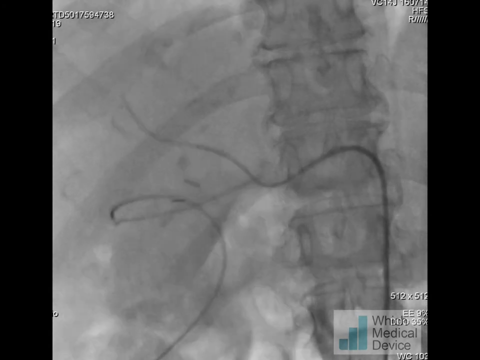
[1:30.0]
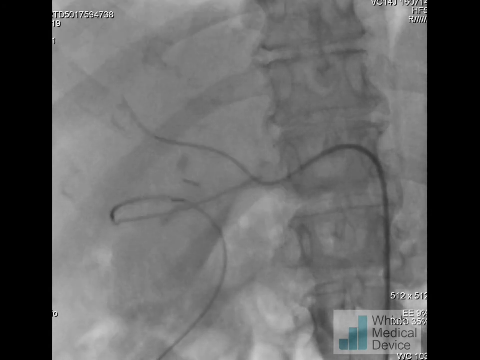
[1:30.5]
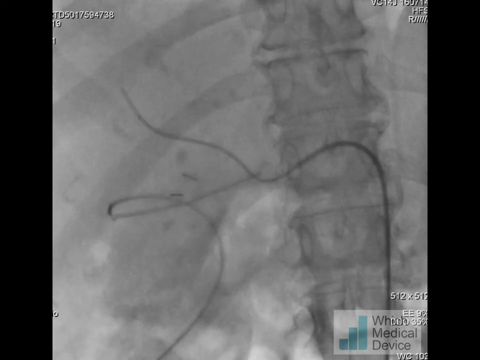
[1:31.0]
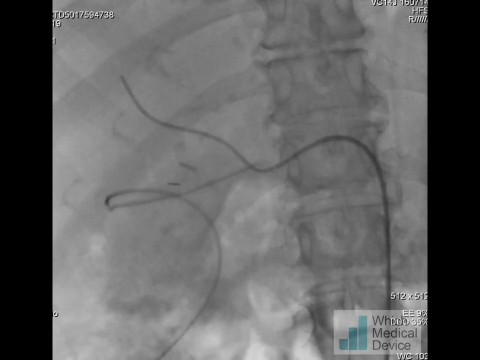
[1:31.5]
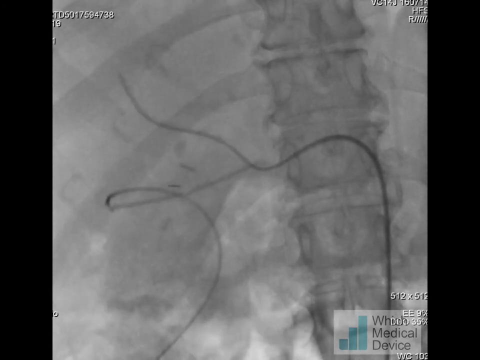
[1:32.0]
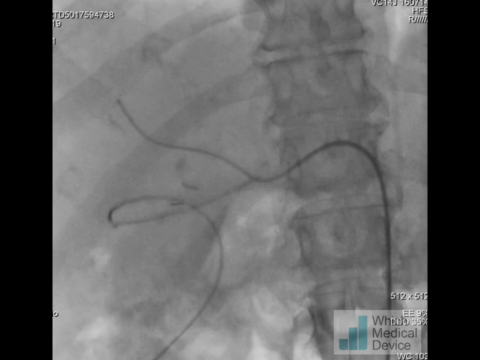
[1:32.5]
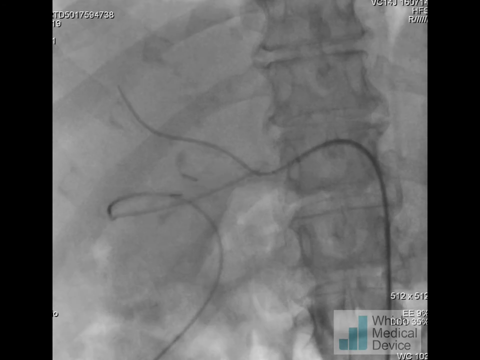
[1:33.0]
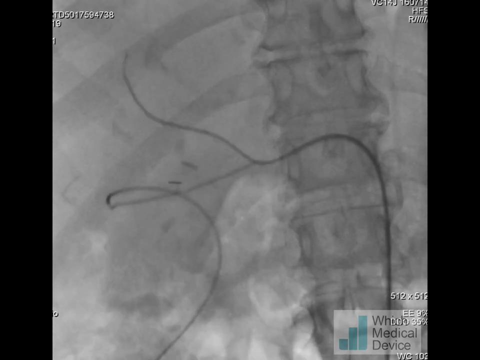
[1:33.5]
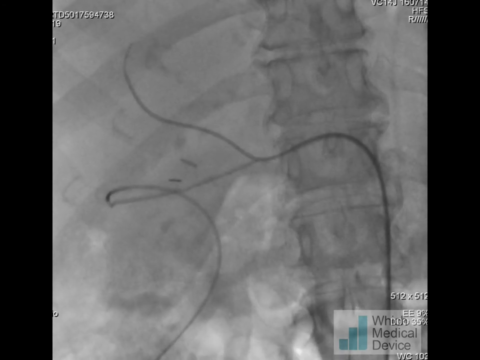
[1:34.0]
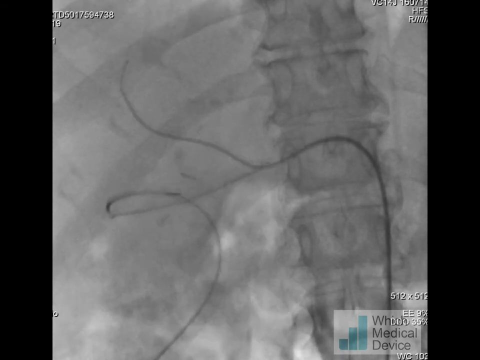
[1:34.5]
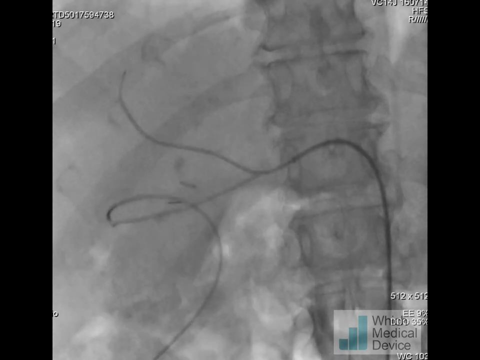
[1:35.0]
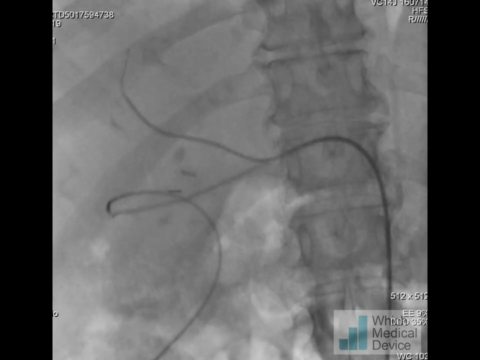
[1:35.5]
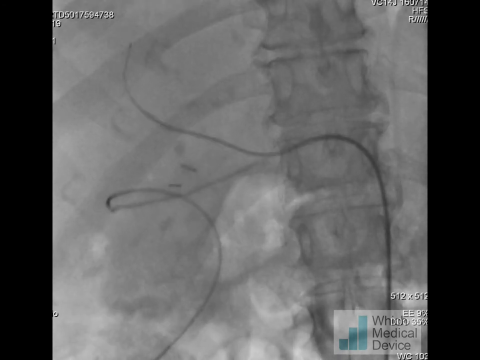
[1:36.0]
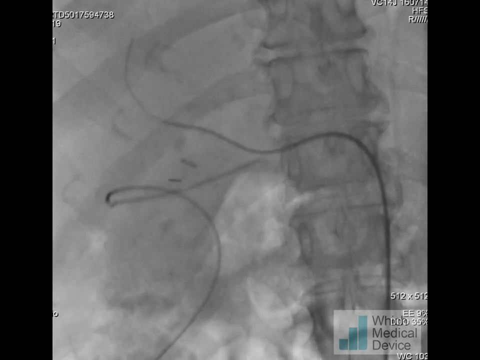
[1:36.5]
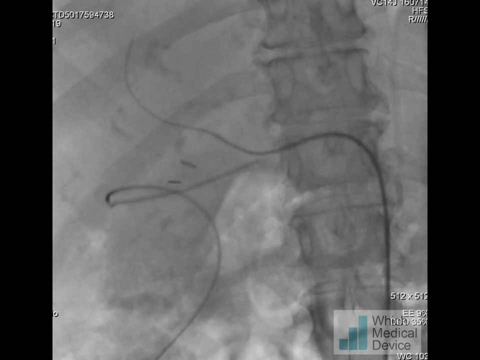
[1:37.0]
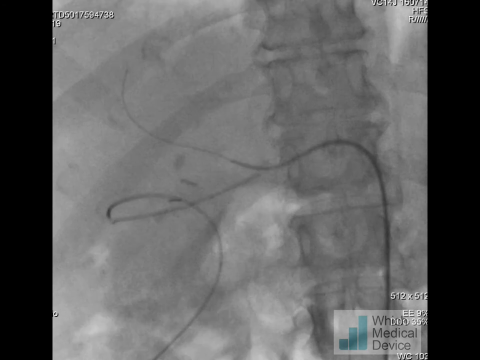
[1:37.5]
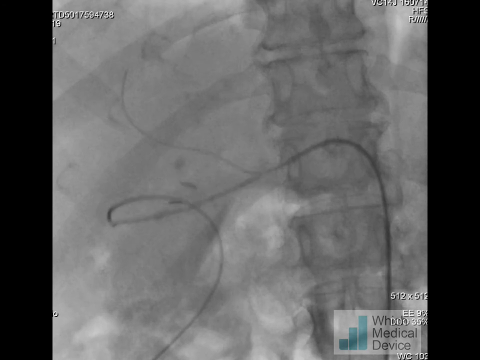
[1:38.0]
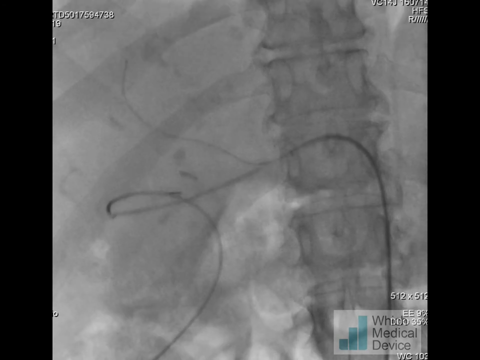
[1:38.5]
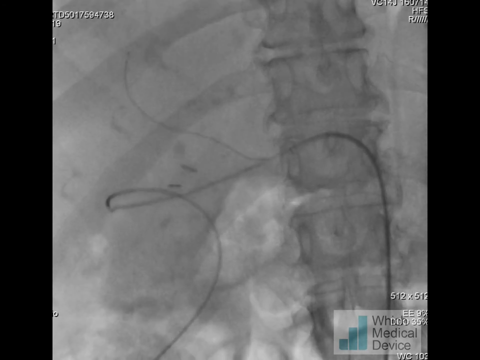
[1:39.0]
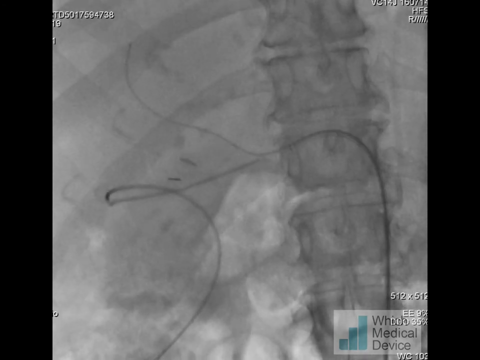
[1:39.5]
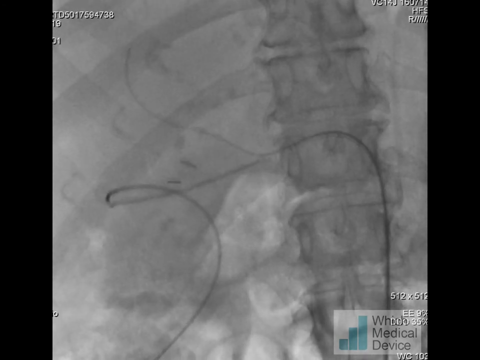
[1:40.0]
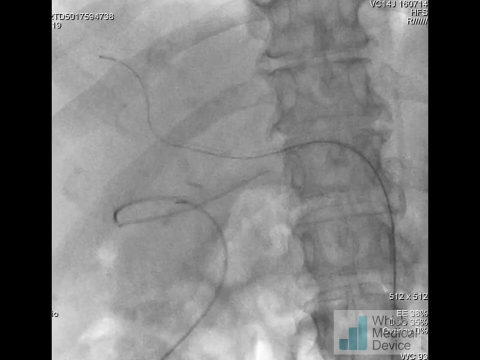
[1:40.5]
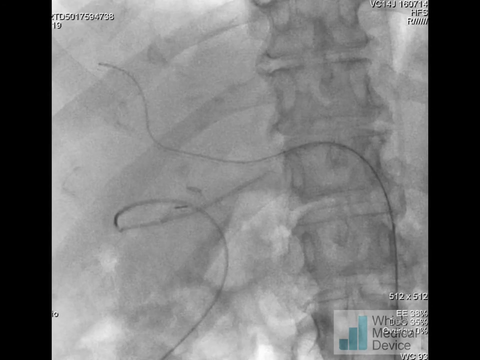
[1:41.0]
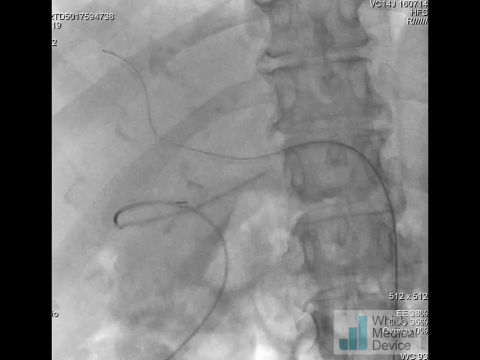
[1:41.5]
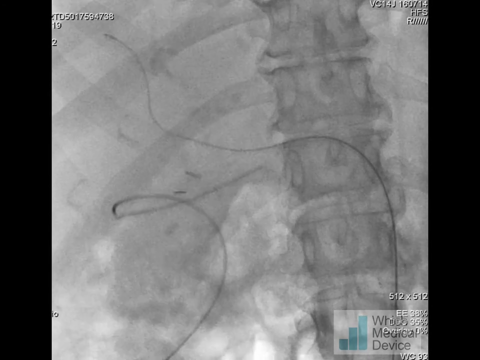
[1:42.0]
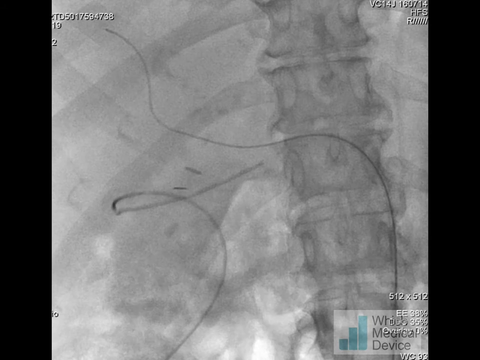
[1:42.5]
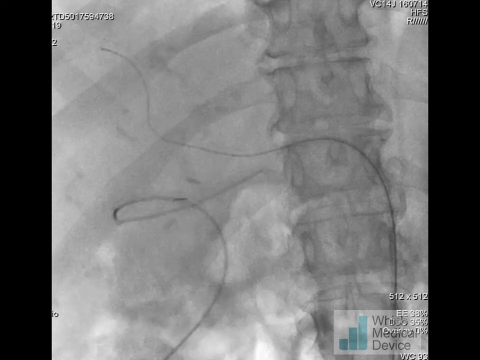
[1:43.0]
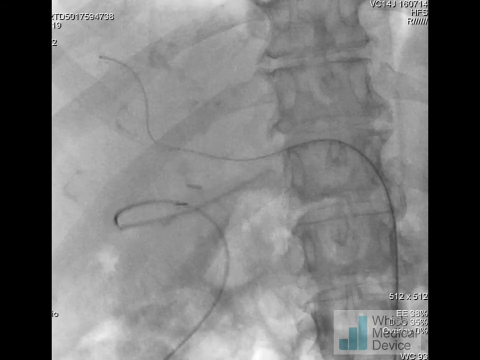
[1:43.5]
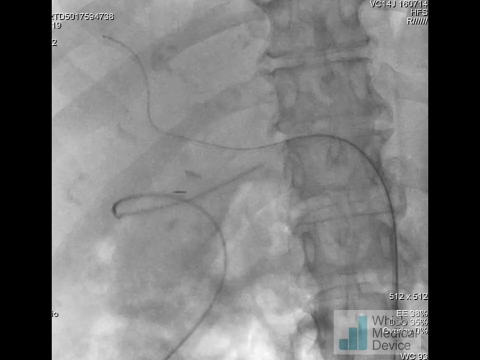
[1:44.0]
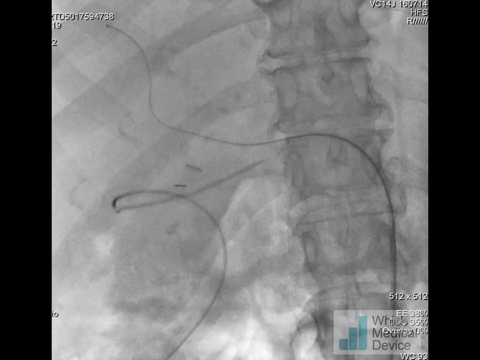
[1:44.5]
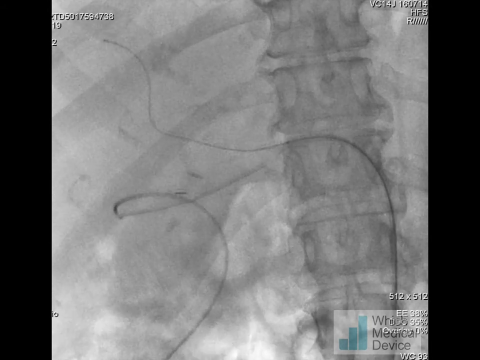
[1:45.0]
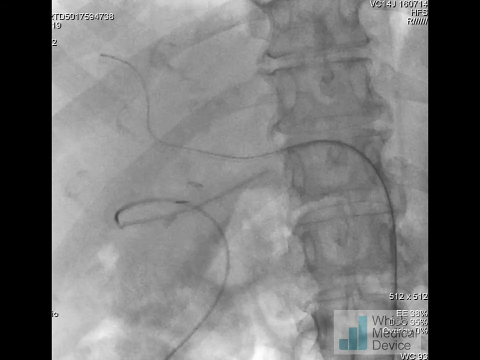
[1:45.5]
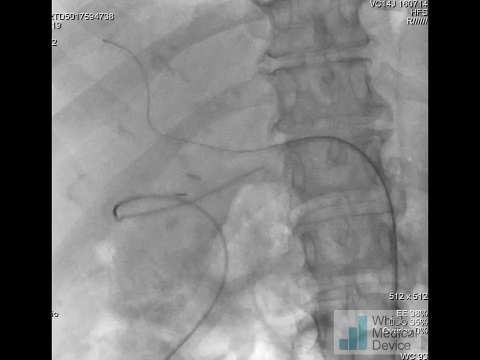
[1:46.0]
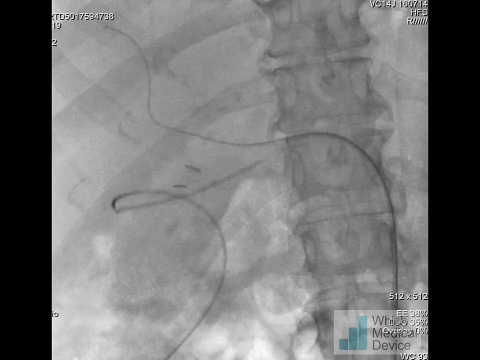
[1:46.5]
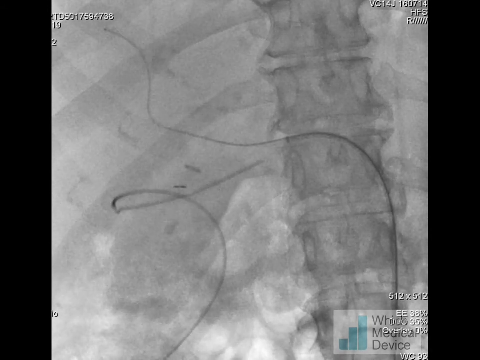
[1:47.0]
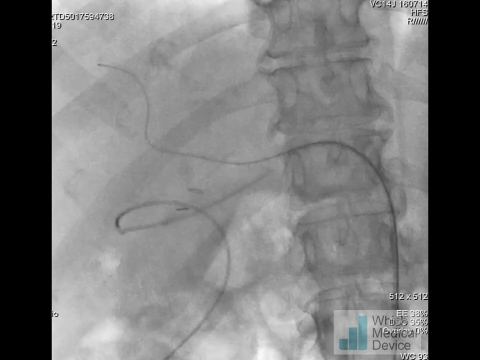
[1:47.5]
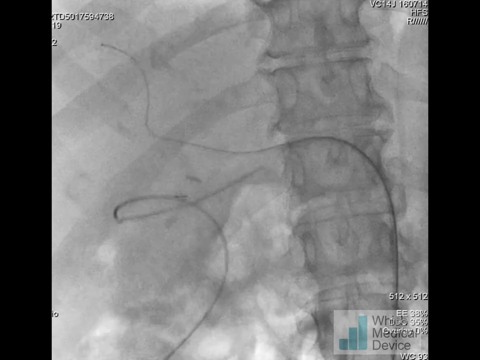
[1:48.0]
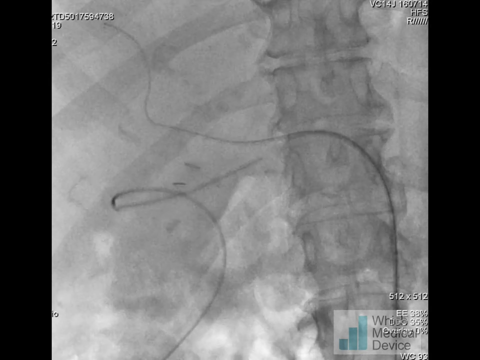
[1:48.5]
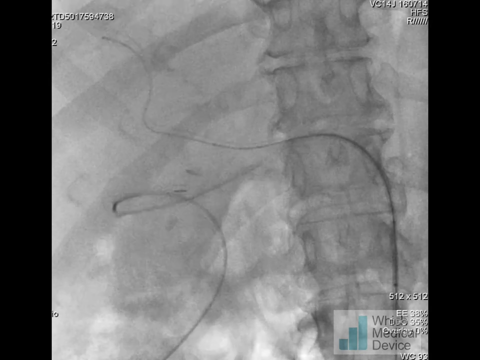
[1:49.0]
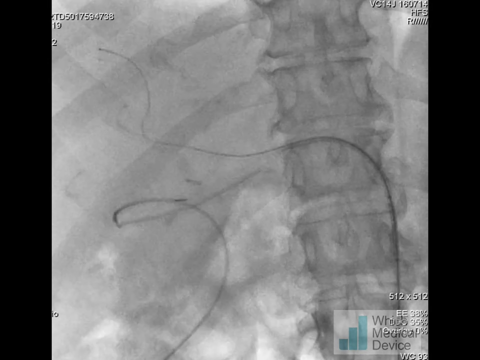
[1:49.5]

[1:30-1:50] A procedure is being done on a medical device. In the lower right corner is a small bar graph identifying the medical device. In the background, a very faint curved line, almost like a string, moves up and down over someone's ribcage area. The spine is on the right side of the frame, curved somewhat upward, with the discs all hooked together in a tower. Protruding from each disc are ribs, a bone on the left and a bone on the right, but the bones on the left are more visible because those on the right are cut off by the framing.